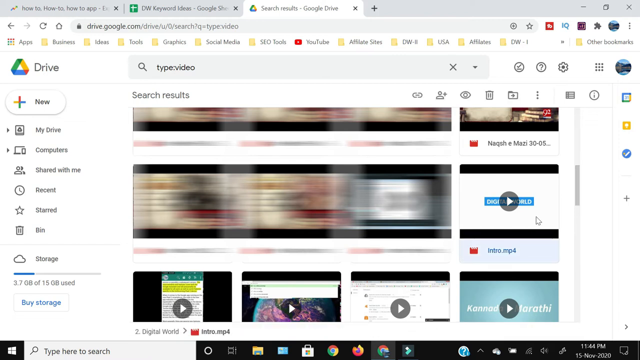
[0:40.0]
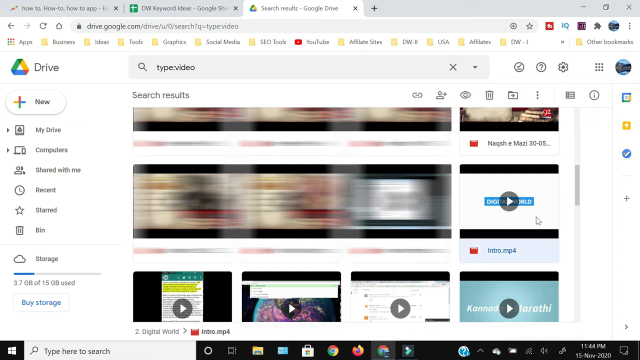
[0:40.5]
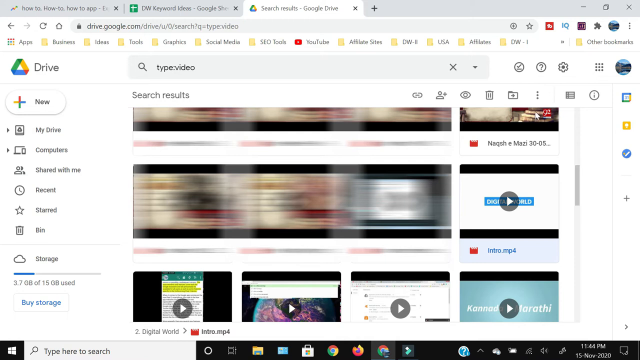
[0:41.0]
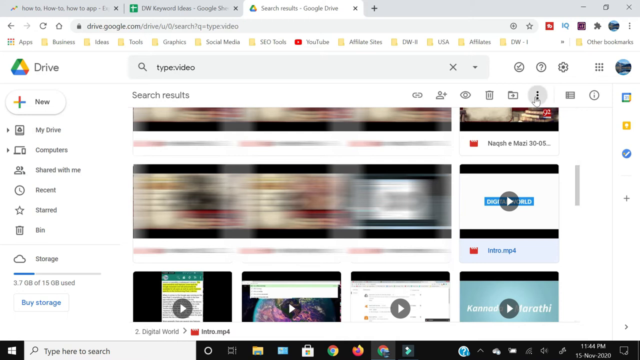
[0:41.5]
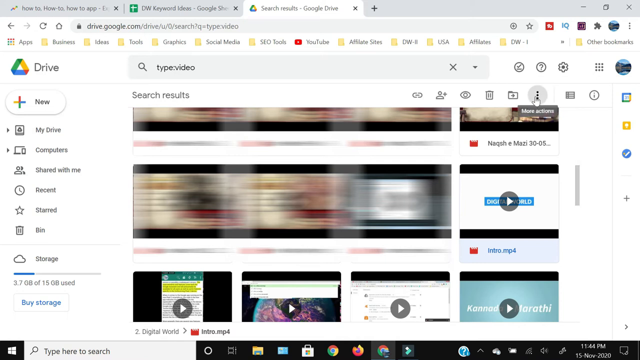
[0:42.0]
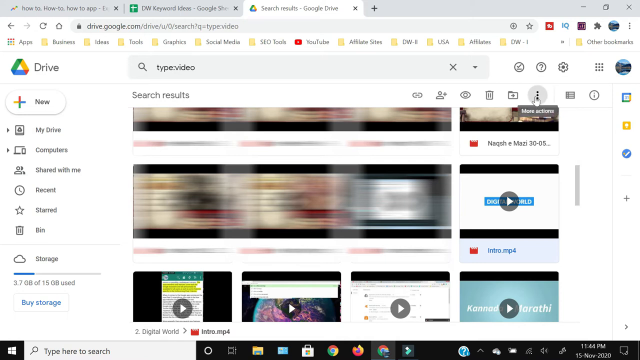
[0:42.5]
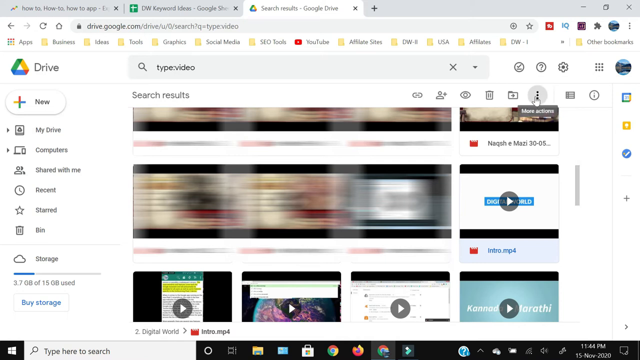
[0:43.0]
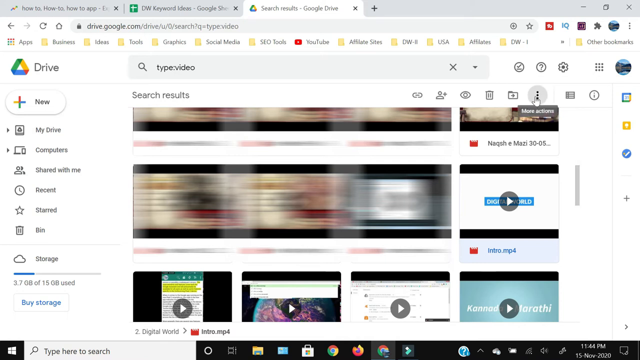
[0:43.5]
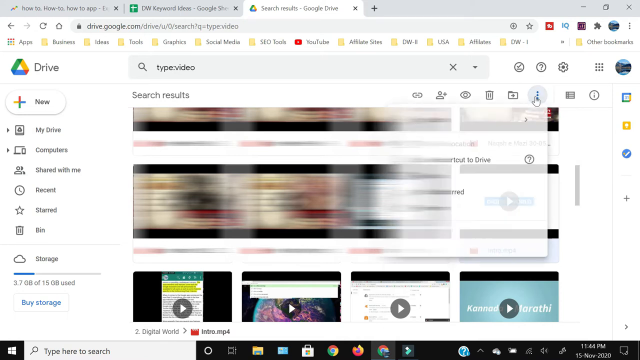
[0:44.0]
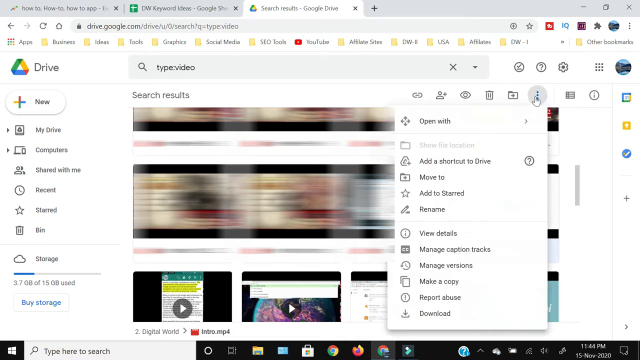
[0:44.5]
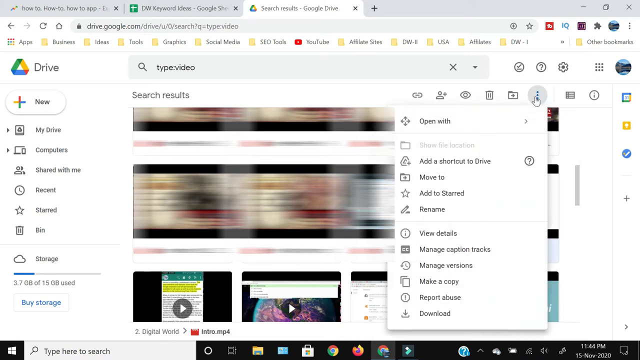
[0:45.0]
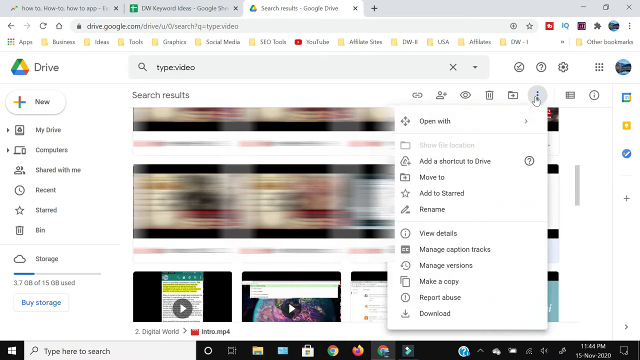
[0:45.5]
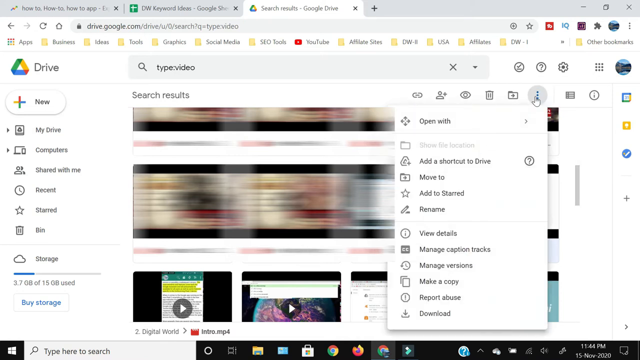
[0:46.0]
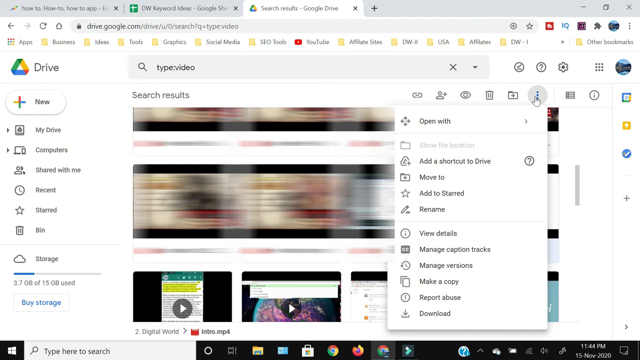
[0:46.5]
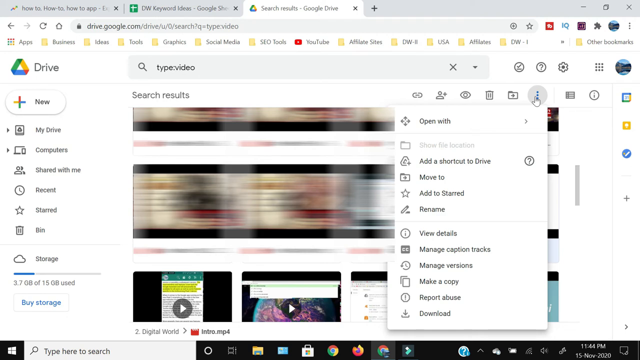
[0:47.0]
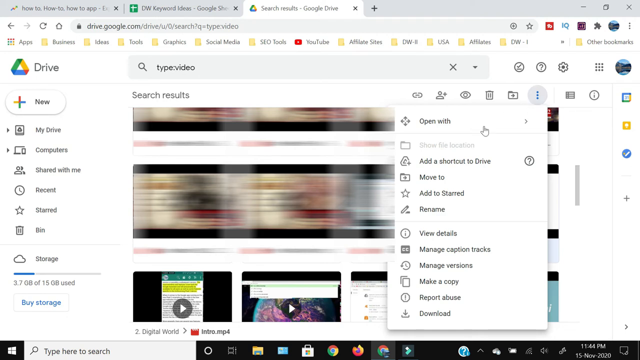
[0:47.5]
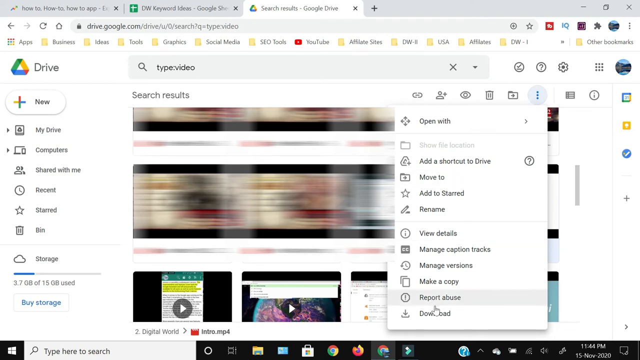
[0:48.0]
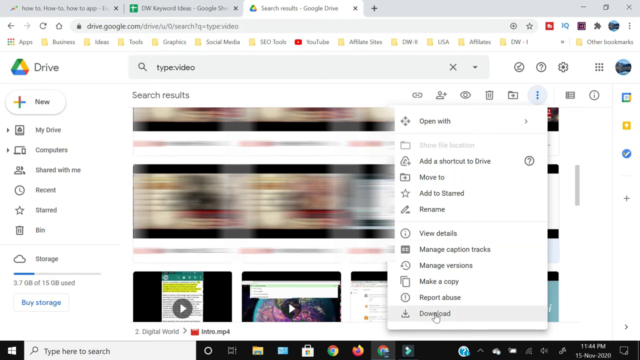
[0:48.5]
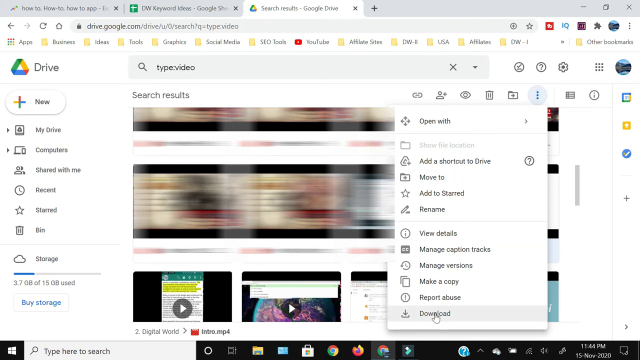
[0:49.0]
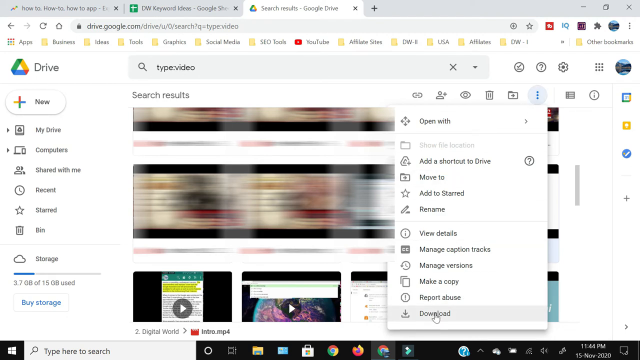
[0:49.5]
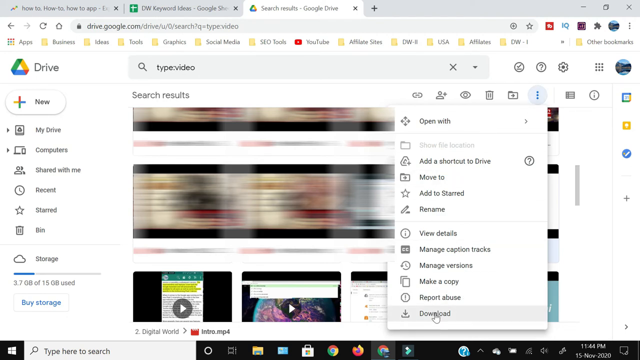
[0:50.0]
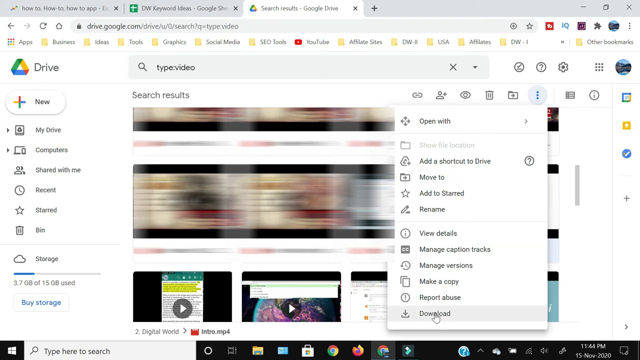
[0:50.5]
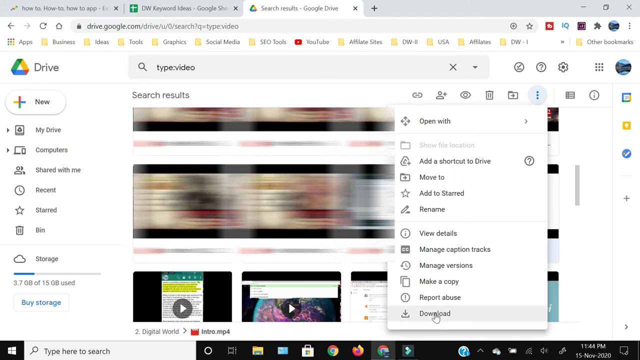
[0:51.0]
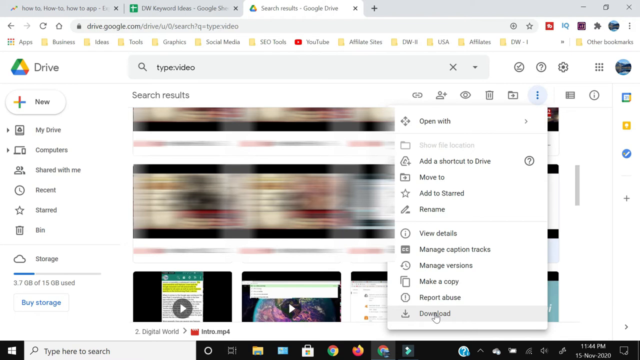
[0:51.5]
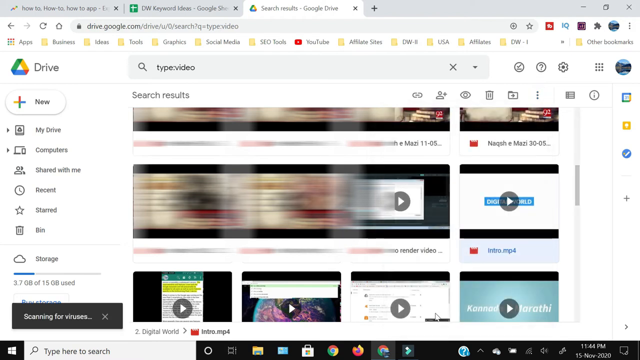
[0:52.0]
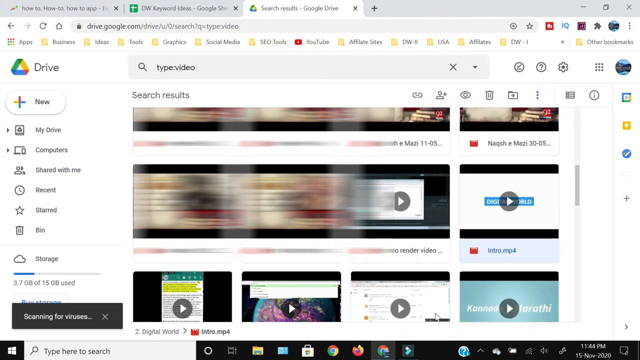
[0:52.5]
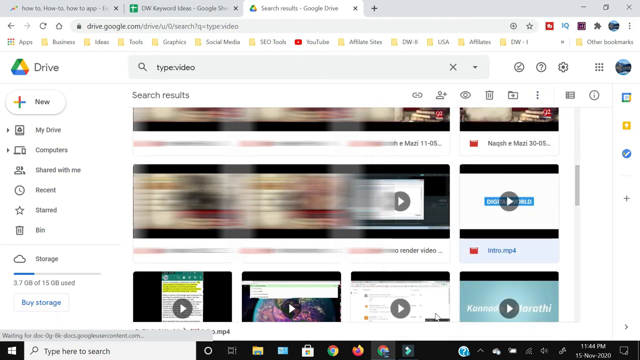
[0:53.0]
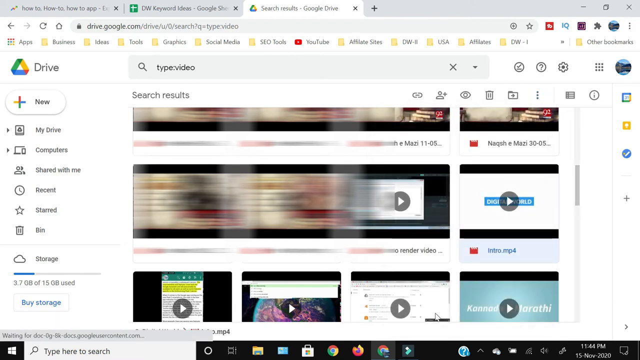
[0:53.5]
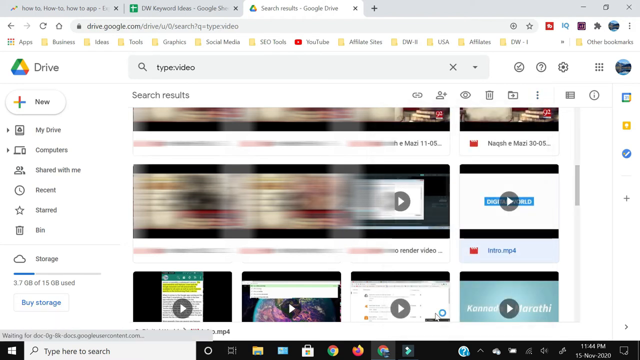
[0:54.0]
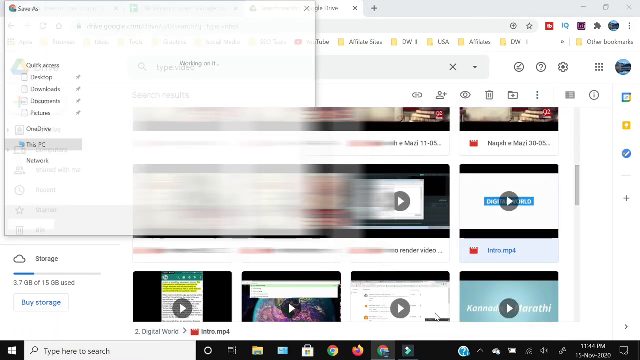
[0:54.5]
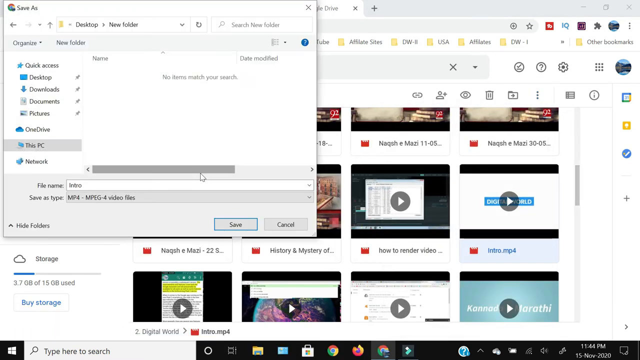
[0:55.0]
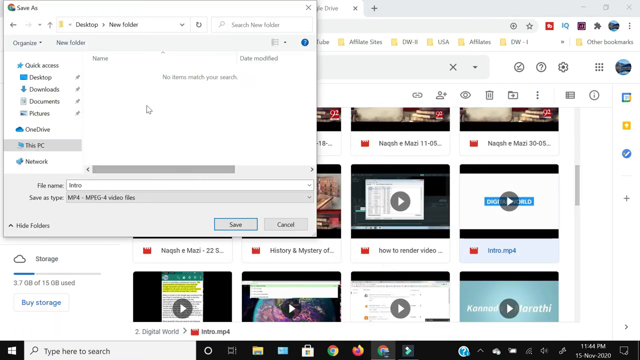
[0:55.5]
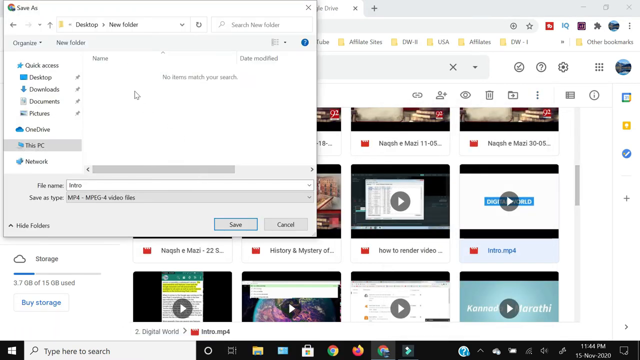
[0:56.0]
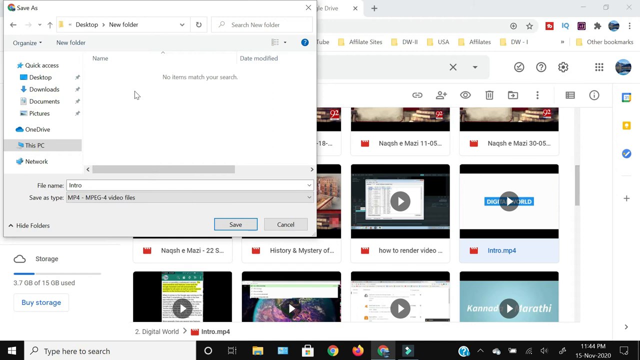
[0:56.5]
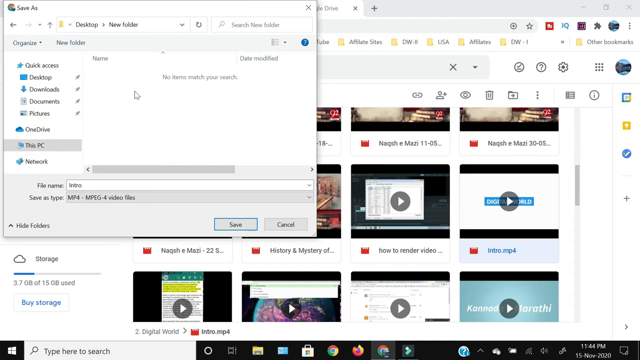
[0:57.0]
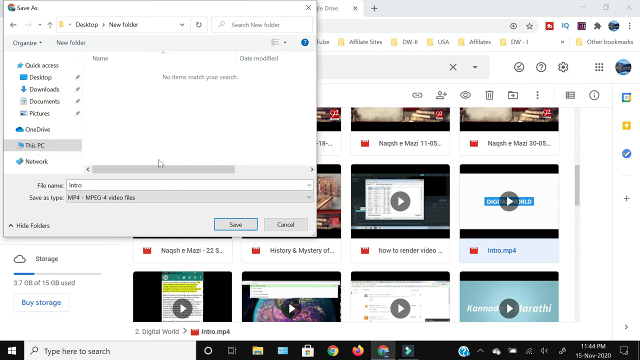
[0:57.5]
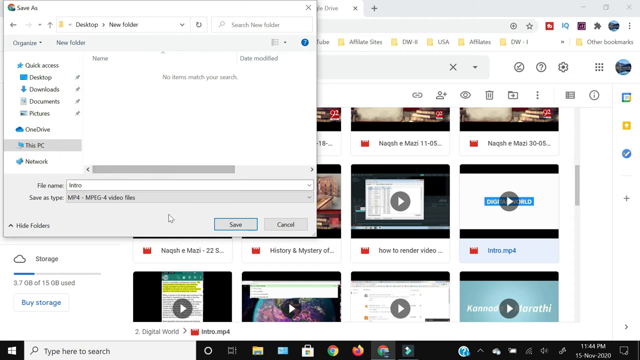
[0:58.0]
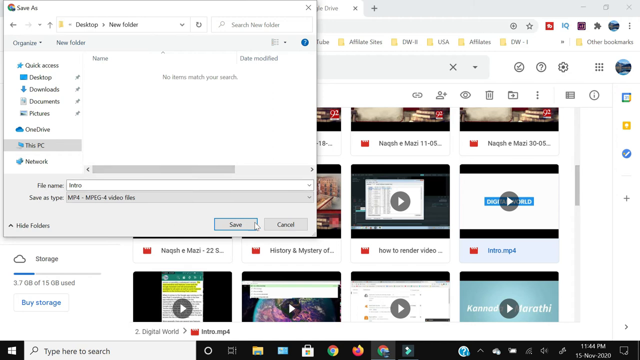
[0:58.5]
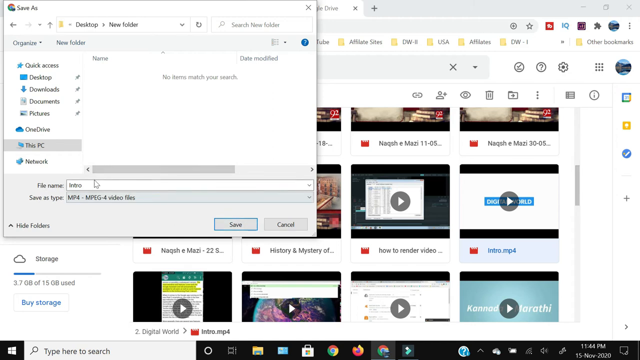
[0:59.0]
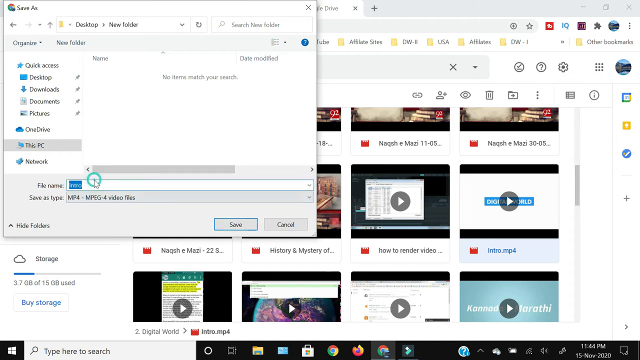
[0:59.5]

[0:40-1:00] A Google Drive page listing only videos or music is shown. Nothing happens at first; then an "Open with" drop-down menu is pulled down and download is clicked. A window pops up showing "intro," apparently for the file intro.mp4, and the name is highlighted. The download appears to be going into the downloads folder.